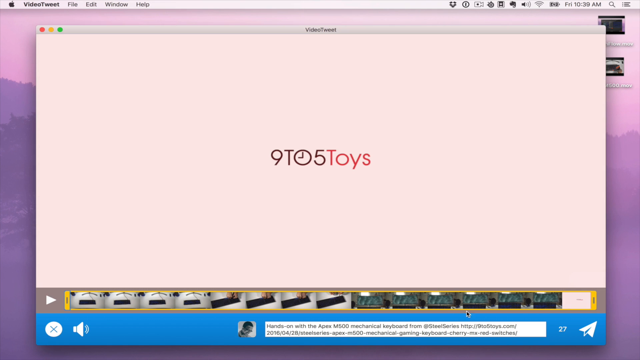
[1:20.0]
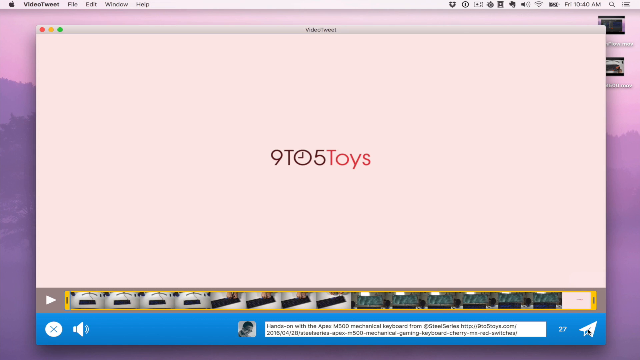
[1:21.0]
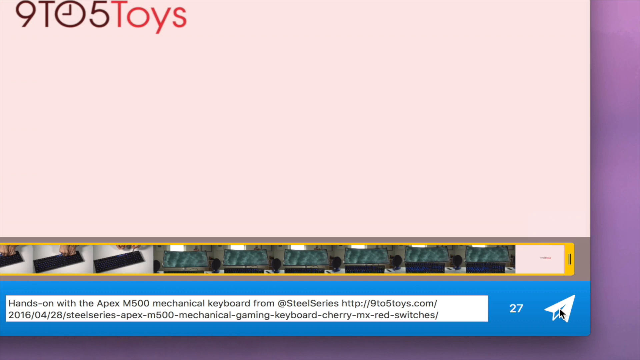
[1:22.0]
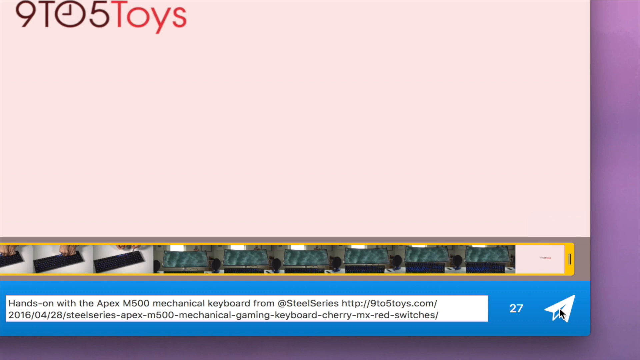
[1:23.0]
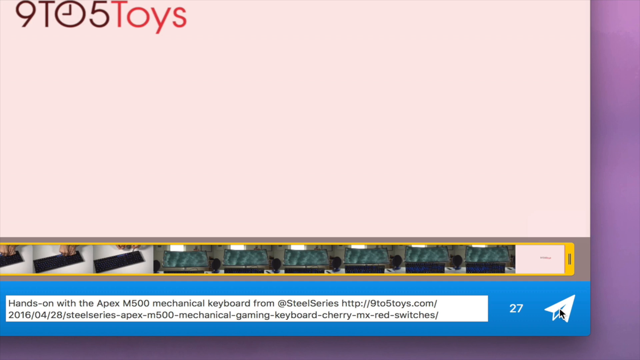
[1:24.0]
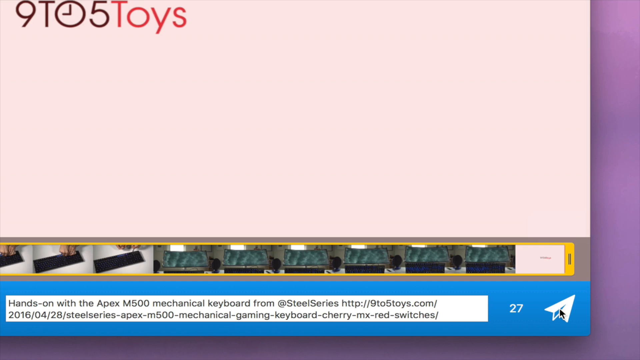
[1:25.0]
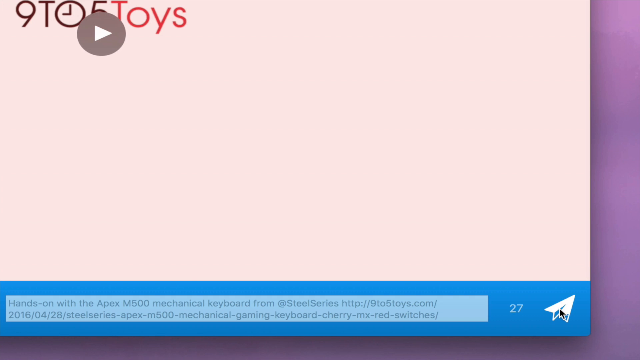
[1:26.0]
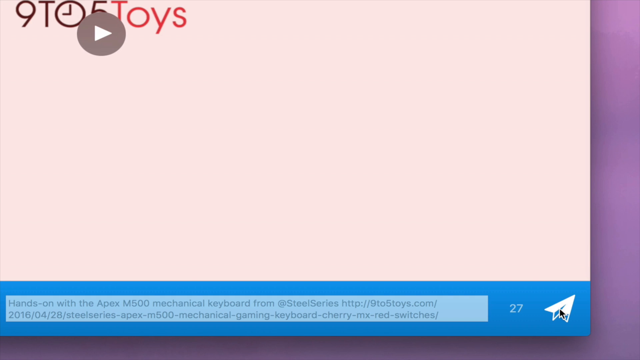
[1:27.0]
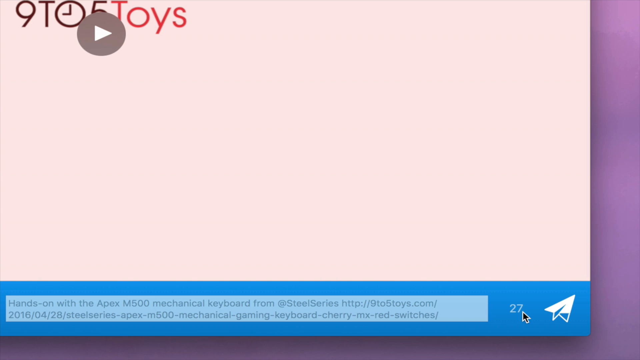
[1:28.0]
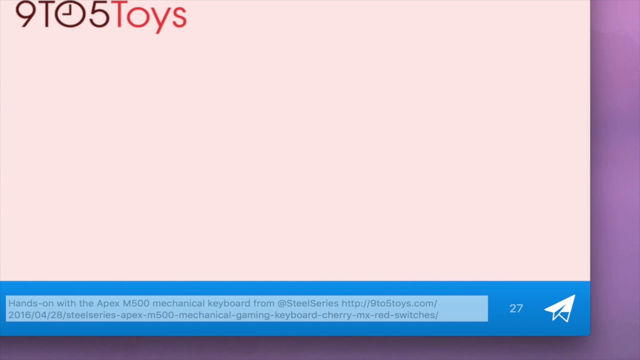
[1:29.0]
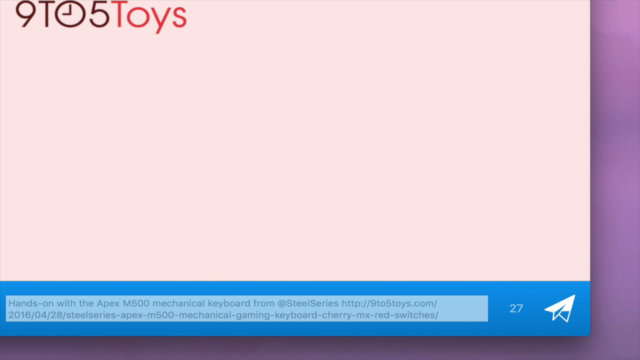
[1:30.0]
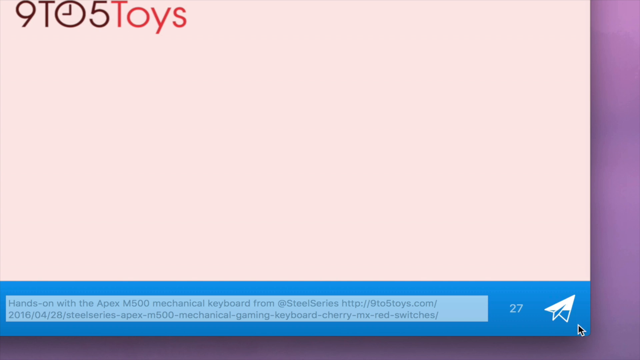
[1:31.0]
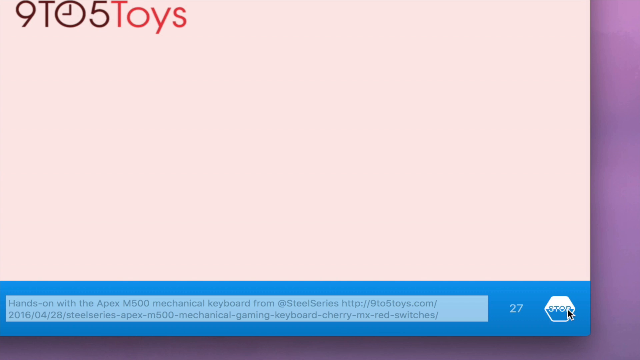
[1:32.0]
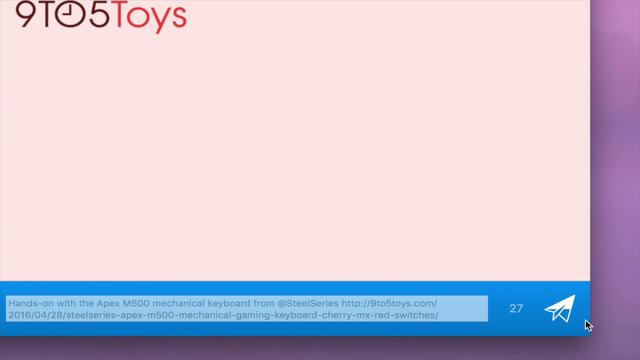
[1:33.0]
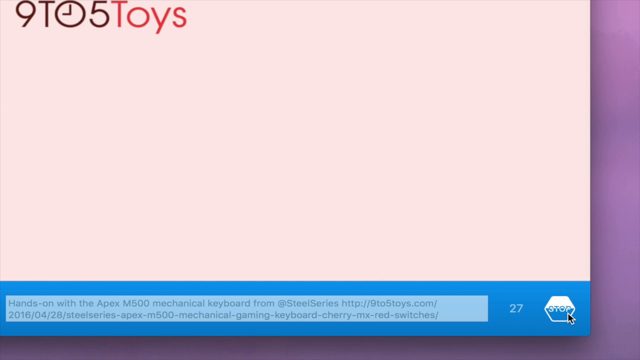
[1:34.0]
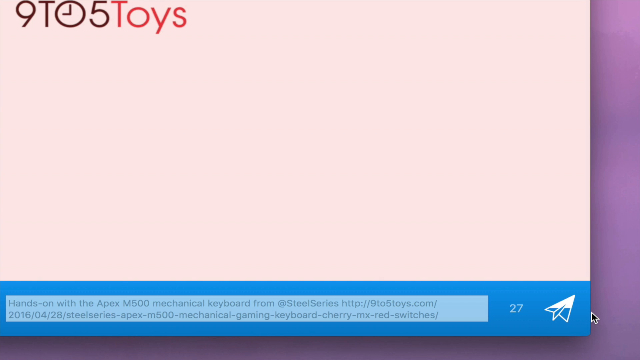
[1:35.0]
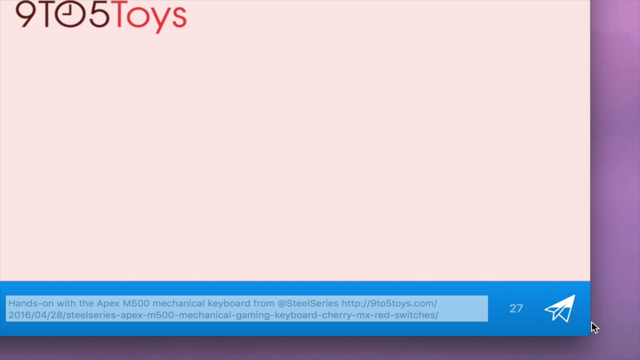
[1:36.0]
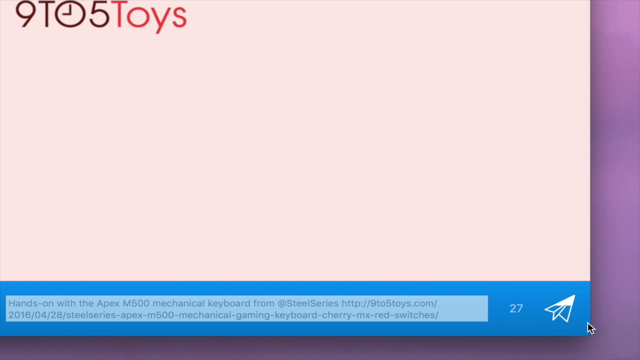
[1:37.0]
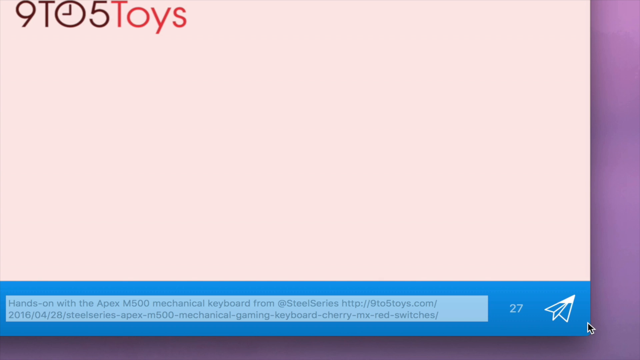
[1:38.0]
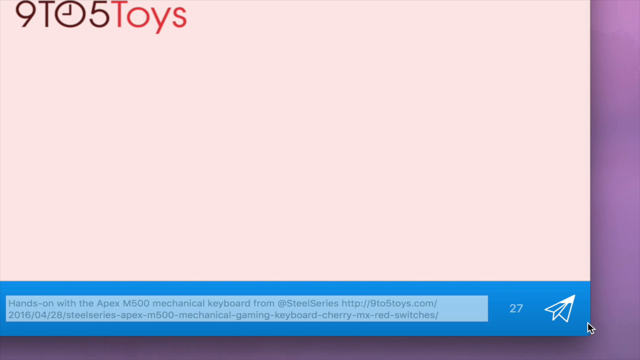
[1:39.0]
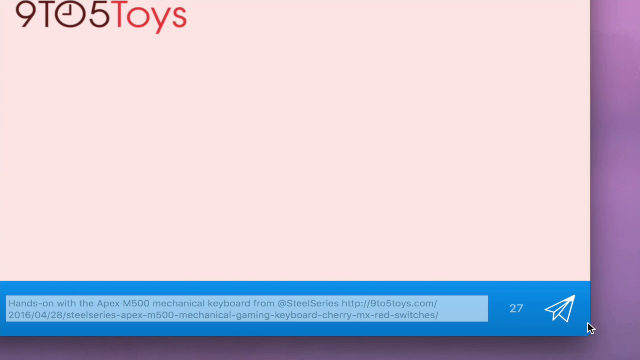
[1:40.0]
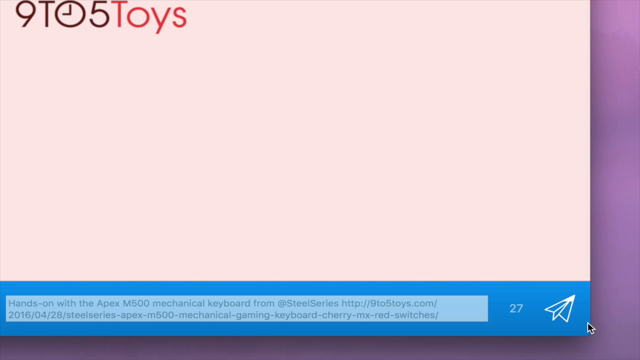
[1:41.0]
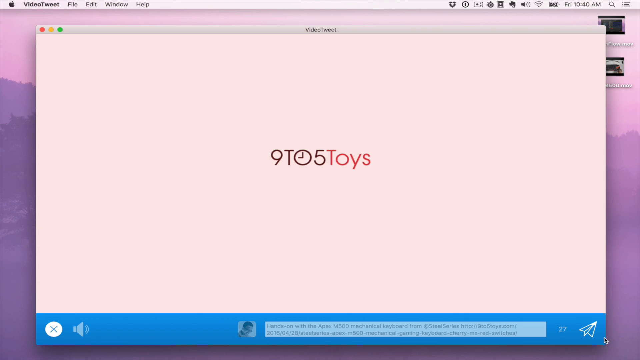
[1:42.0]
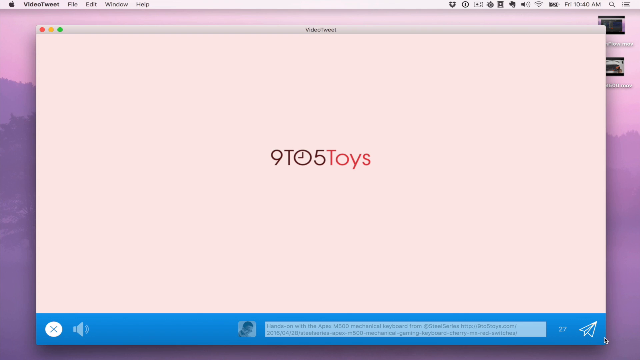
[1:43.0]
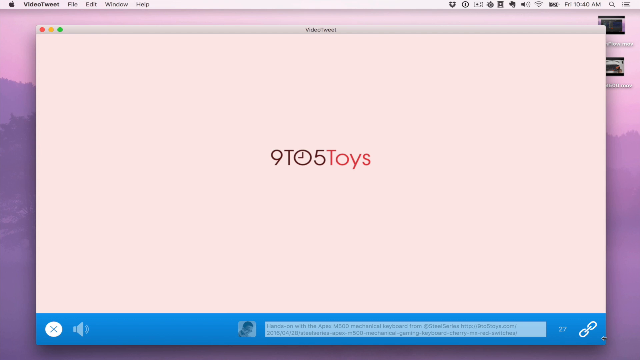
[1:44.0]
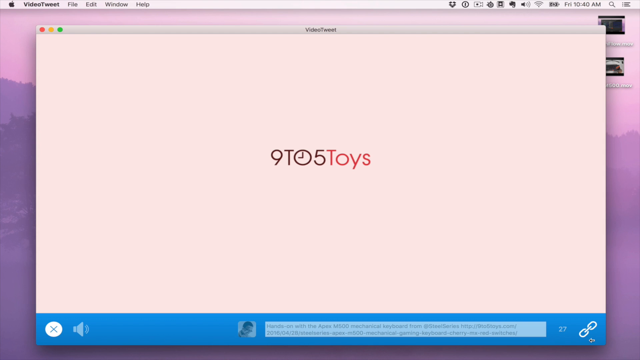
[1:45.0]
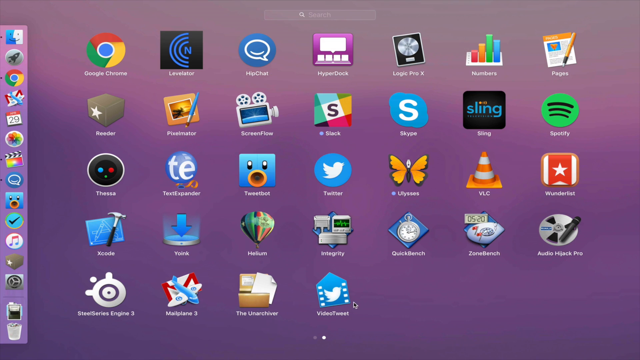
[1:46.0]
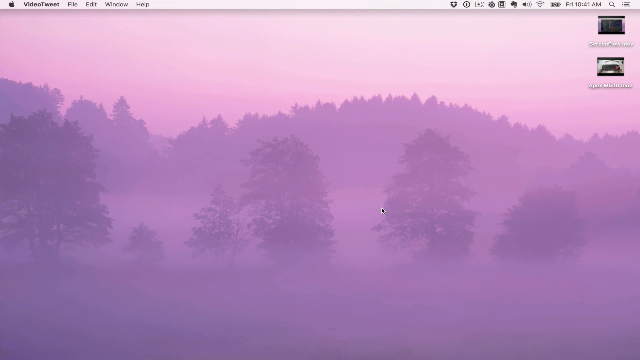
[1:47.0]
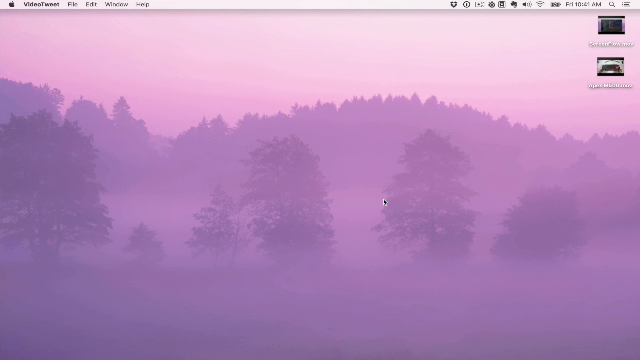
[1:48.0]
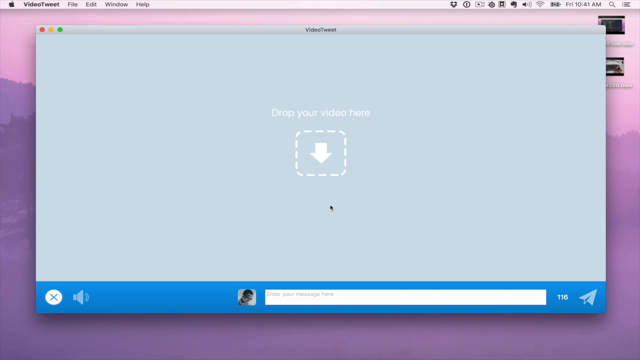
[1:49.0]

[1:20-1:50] The video editing software is still on the light pink-purple desktop, with the preview window showing the 9TO5Toys logo in front of a peach background. The video crops into the bottom right of the software, where the black pointer cursor hovers over the white Twitter paper airplane symbol. It is clicked, and the white inside the paper airplane begins to move up as if emptying until the symbol becomes an outline. As the pointer moves back over it, the symbol flashes to become a six-sided stop sign, which is also losing its white content. The cursor does not click but moves away to hover to its right, and all of the white content in the paper airplane symbol disappears up to the top, revealing a white linked chain icon. The video quickly transitions to a new desktop location with a pinky purple background and many app icons in rows and columns, with a separate vertical column of icons on the left. The VideoTweet icon is selected from the rows on the right; it is the very last app on the bottom row, fourth column along out of seven. Its graphic is a blue open letter seen from the front with a white bird on the front and white sprocket symbols going up vertically on the front left and right of the letter. It is clicked, and the video cuts back to the empty pinky purple tree-illustrated desktop before the VideoTweet program loads in the centre of the screen. It has the horizontal bar at the top with "video tweet" on it and the blue horizontal bar at the bottom with the "enter your message here" field; the main section is generally empty and grey, with "drop your video here" written in white inside it and a white dotted outline box containing a down-pointing arrow.